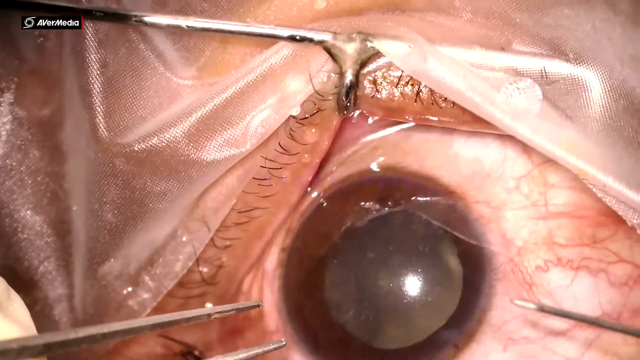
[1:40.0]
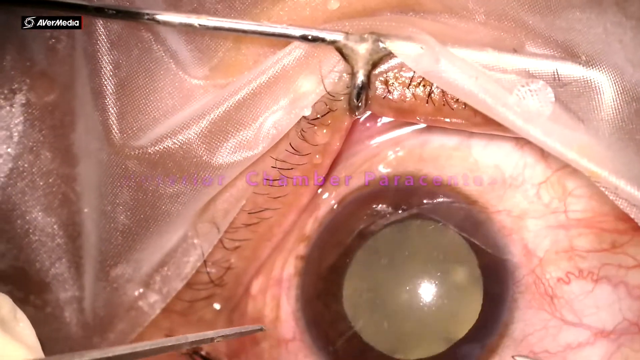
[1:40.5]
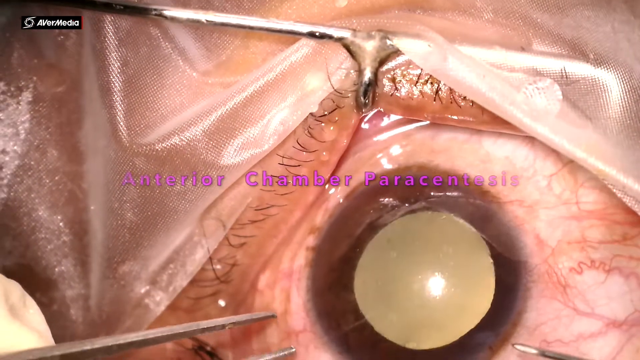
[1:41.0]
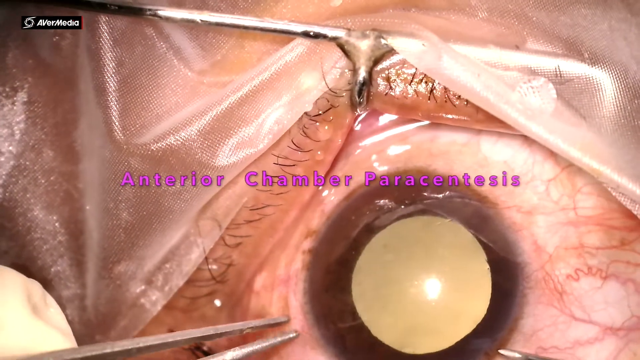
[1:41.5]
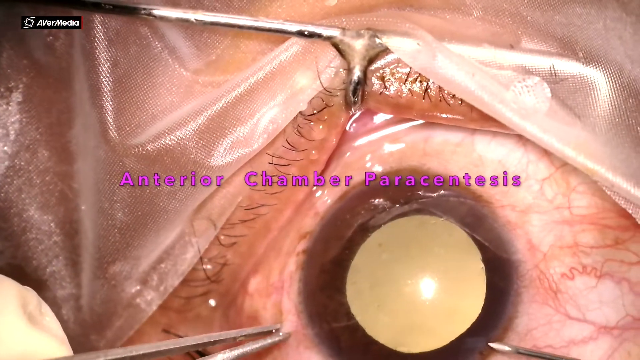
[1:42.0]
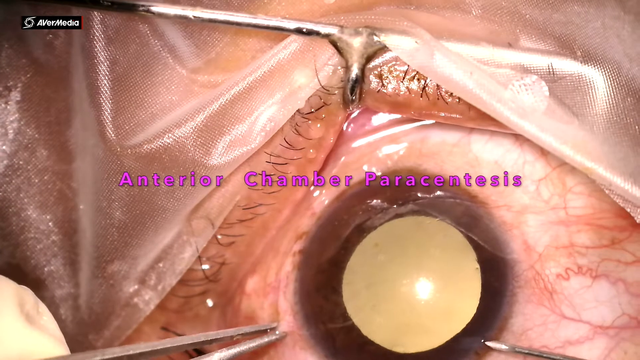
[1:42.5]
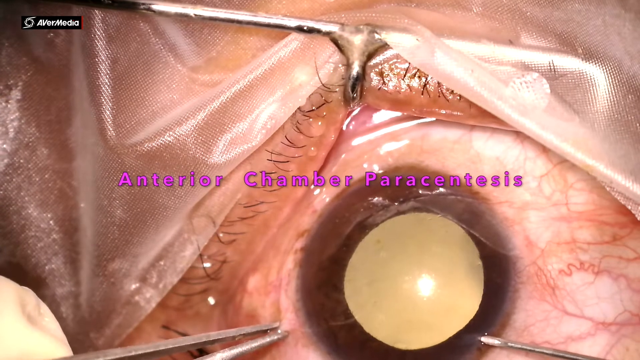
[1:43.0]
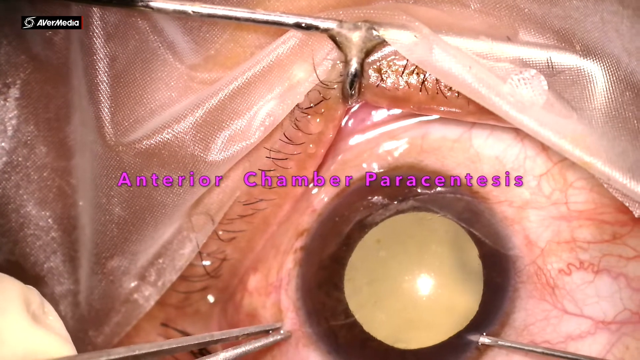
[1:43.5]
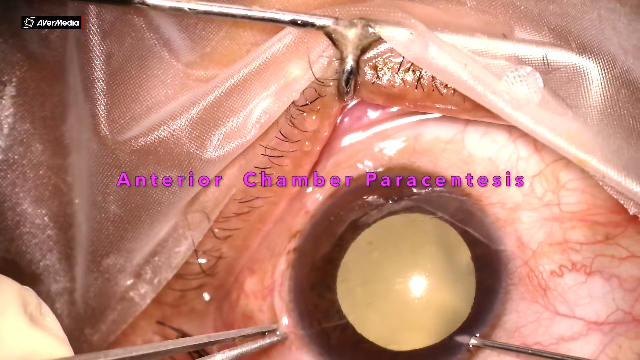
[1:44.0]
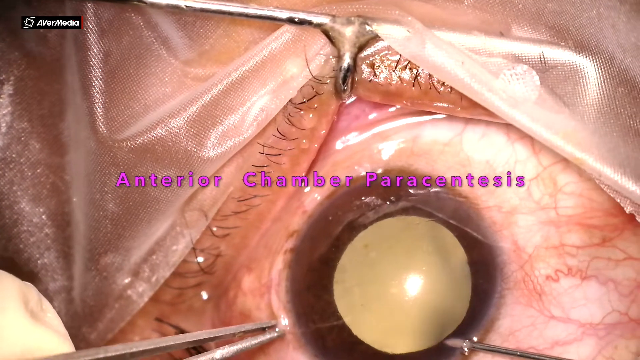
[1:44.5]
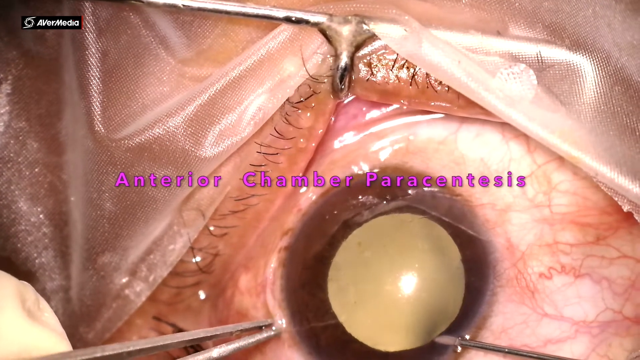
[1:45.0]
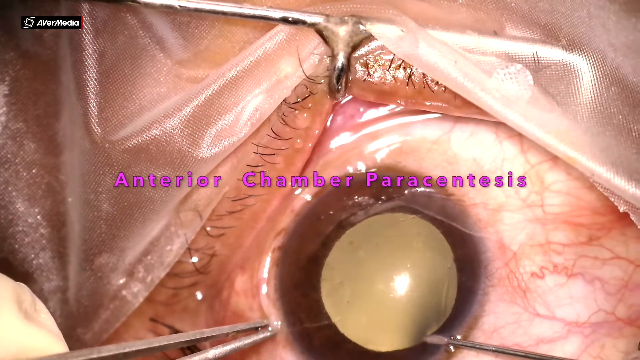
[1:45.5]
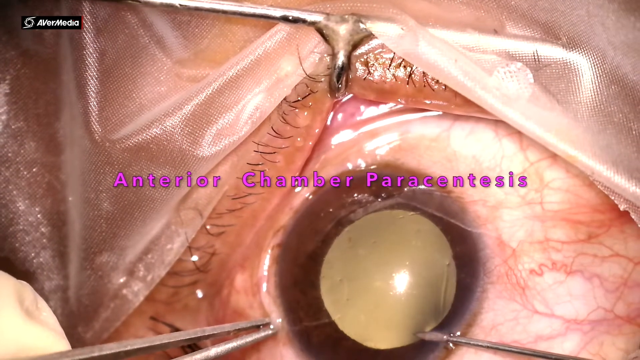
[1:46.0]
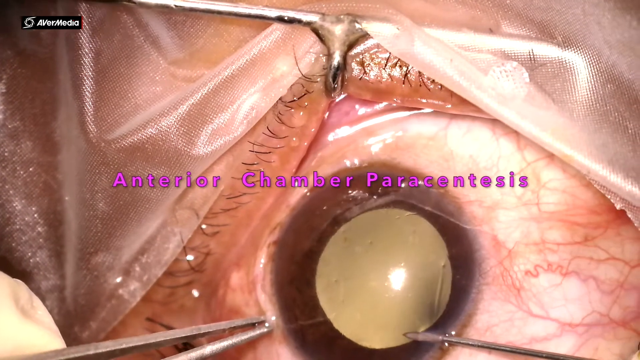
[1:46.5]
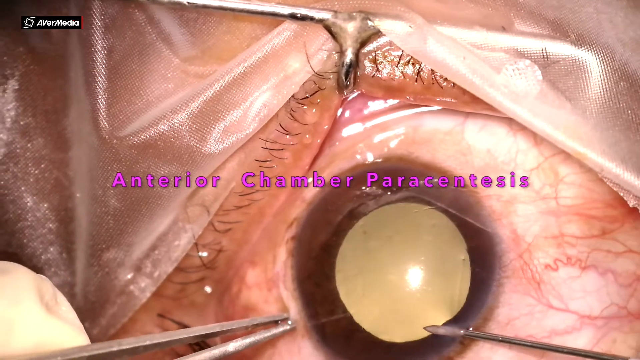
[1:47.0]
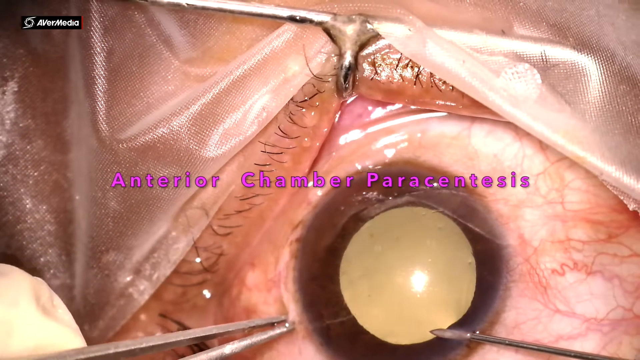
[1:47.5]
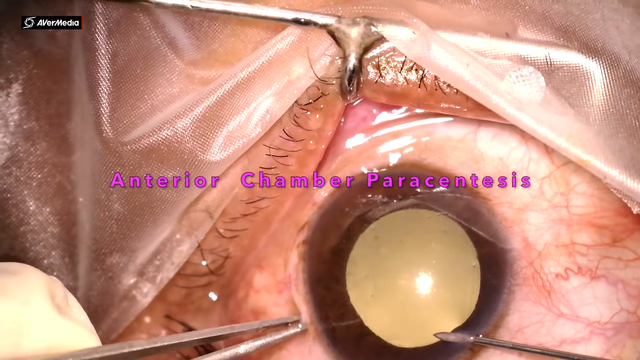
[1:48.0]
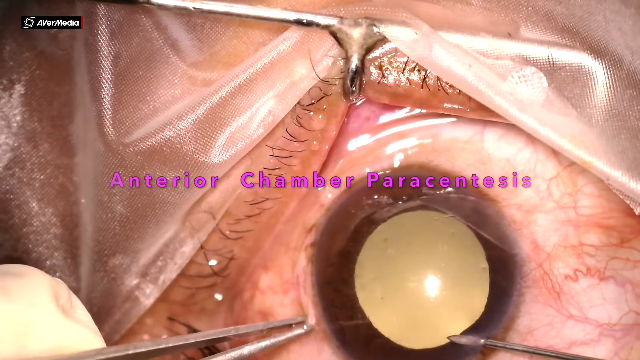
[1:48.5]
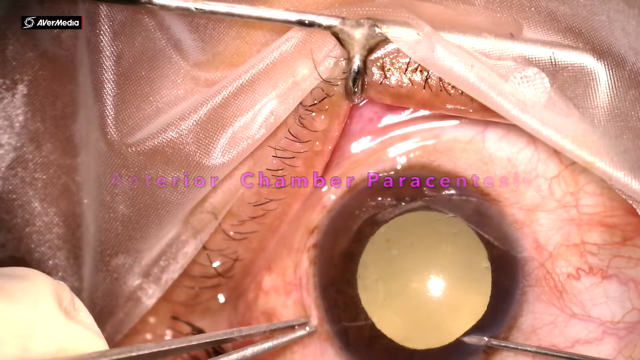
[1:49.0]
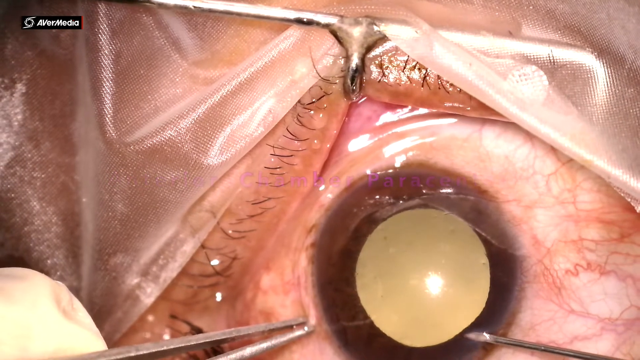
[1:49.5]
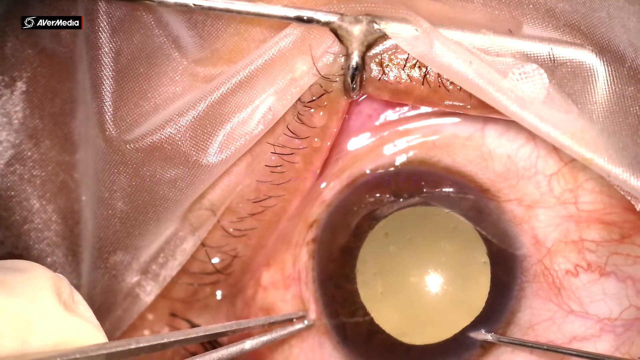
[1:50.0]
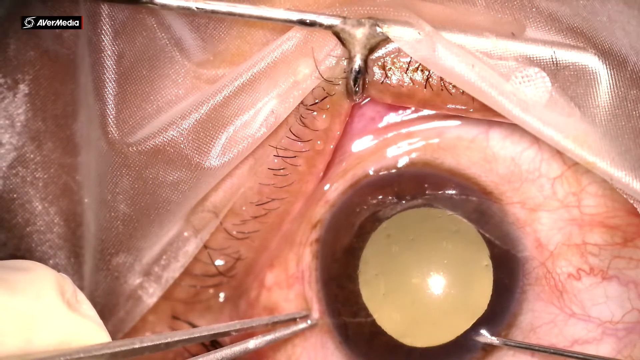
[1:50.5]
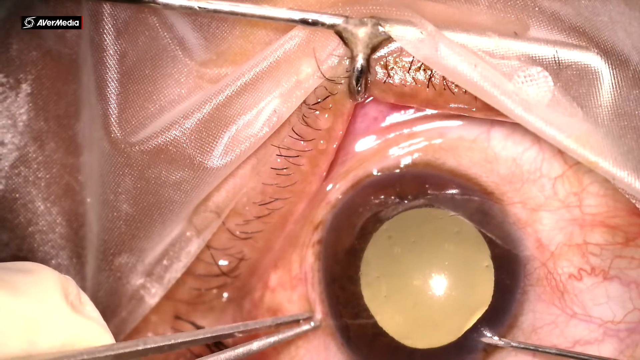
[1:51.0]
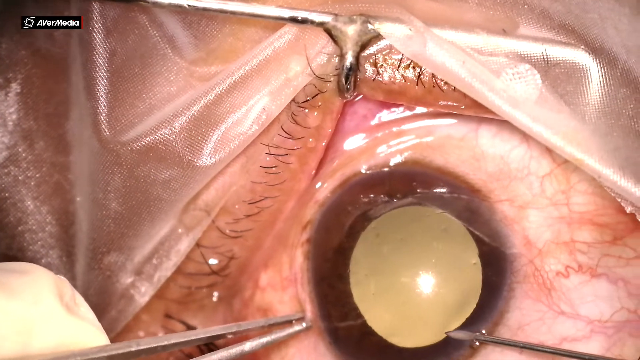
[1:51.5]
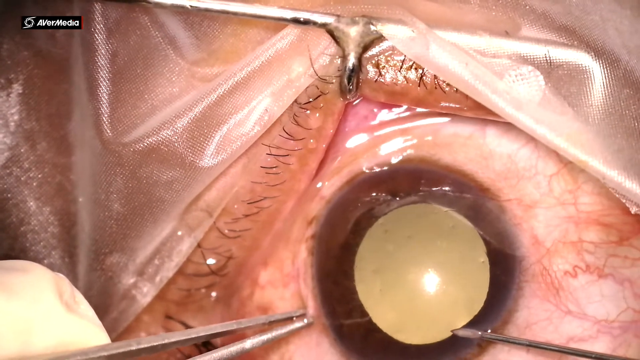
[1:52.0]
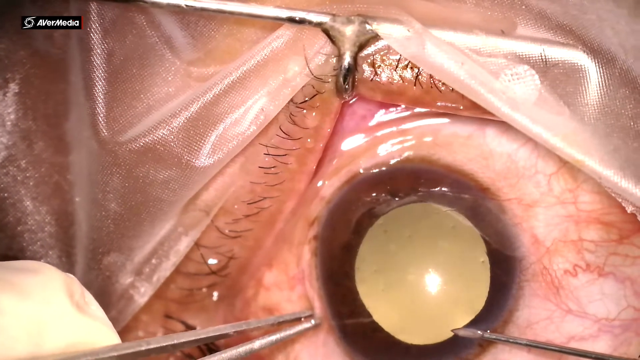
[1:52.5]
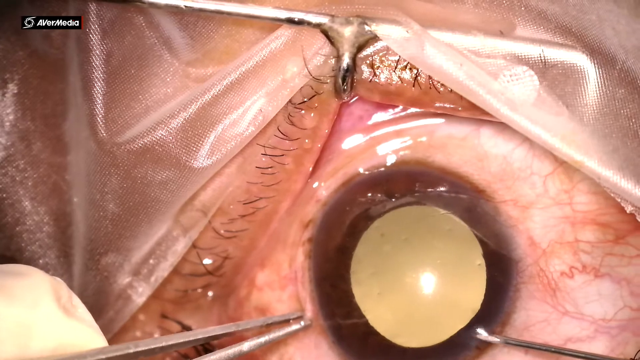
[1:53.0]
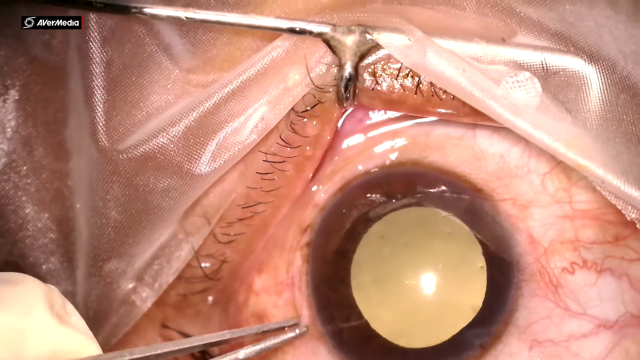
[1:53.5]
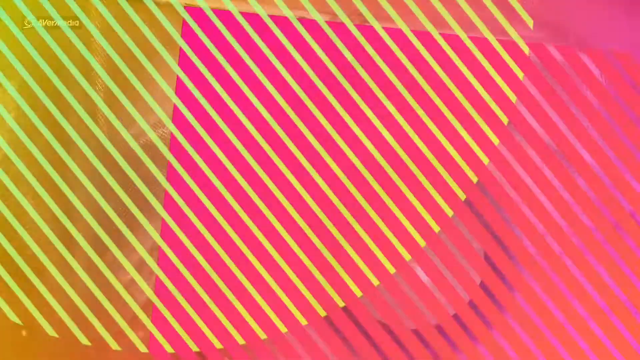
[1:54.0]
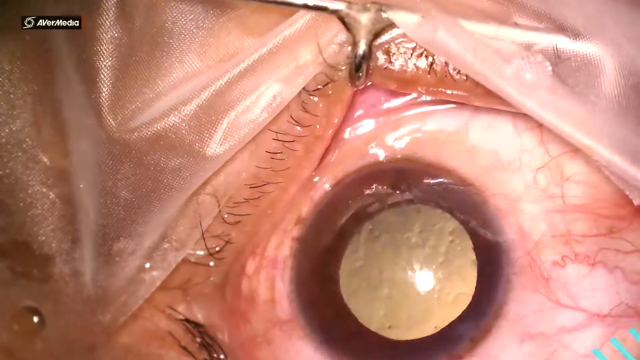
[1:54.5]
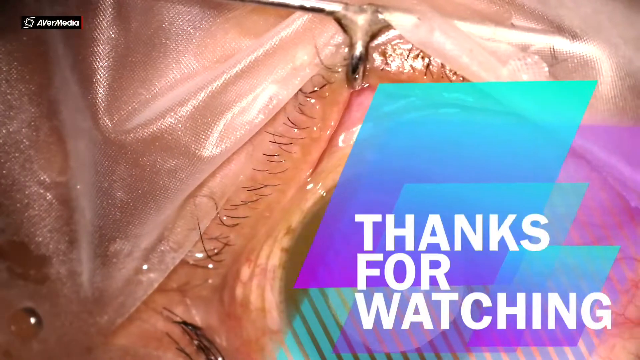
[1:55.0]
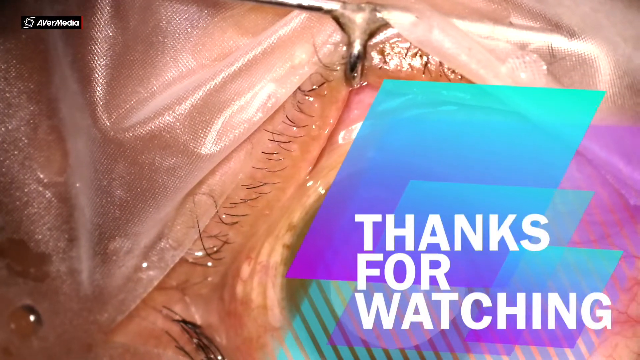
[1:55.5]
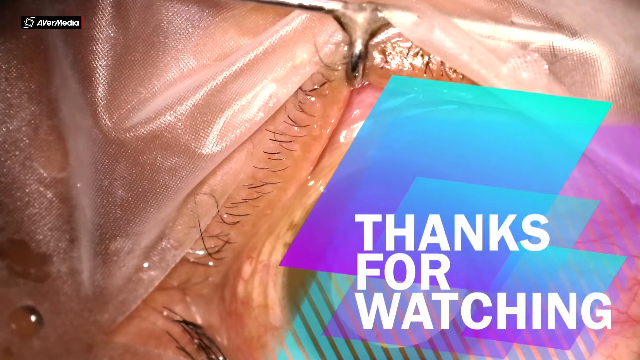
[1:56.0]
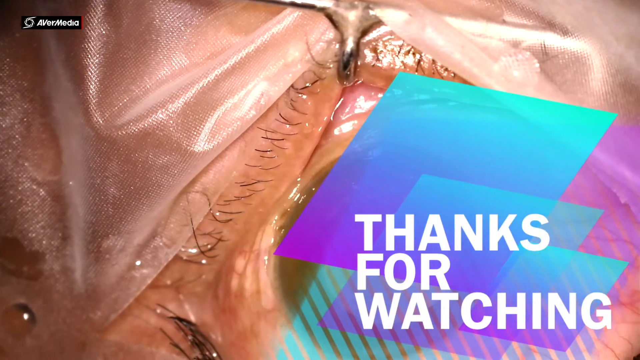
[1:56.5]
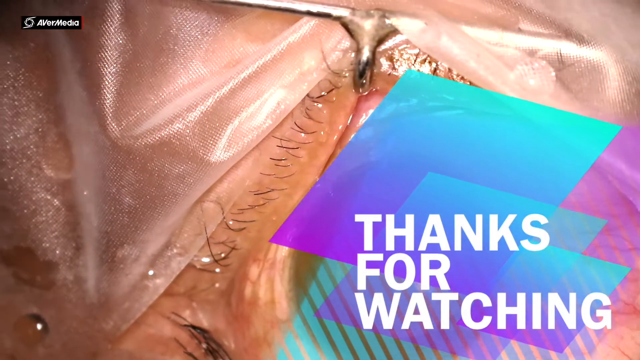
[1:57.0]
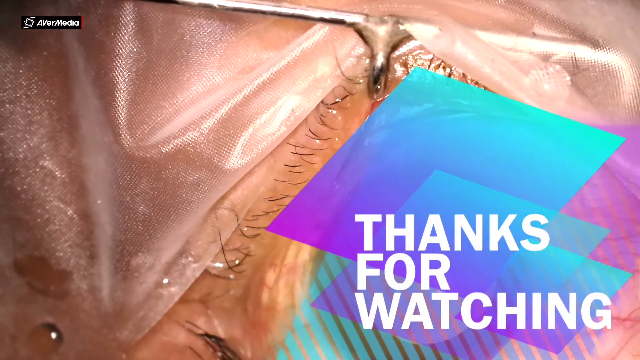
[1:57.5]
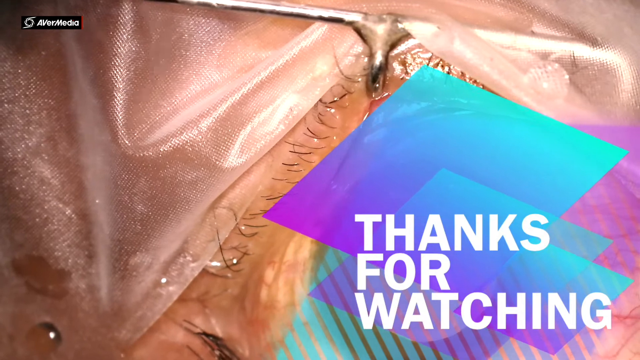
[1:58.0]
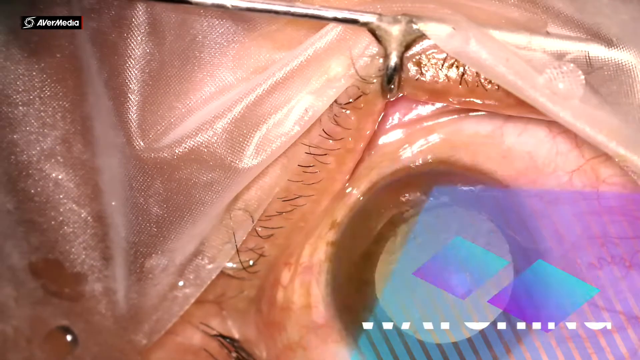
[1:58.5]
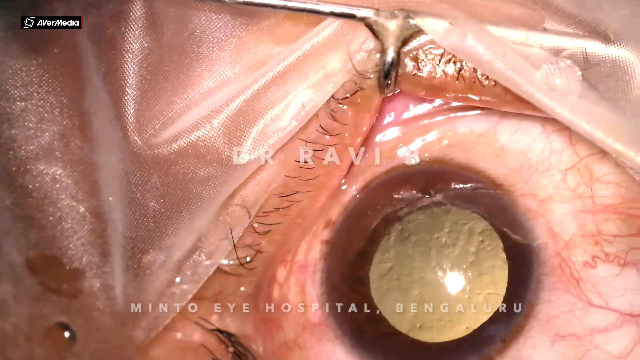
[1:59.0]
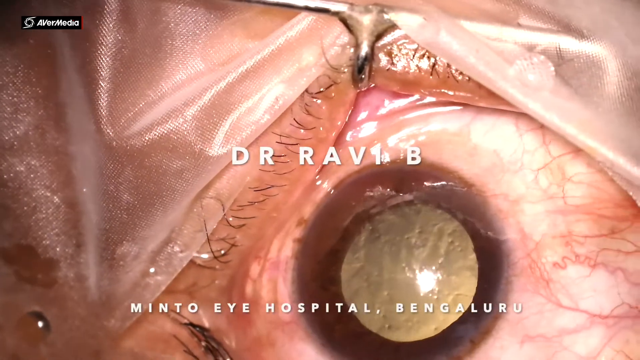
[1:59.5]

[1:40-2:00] The eyeball is still held open, and purple text in the middle of the screen reads "anterior chamber paracentesis". Two clippers now hold the eyeball in place. The top left of the eyeball is clearly visible, along with the surrounding area around the eye. Everything else on the person is covered except the eye, which shows through a small hole in the covering. Then an ending screen appears with "thanks for watching" in the bottom right.